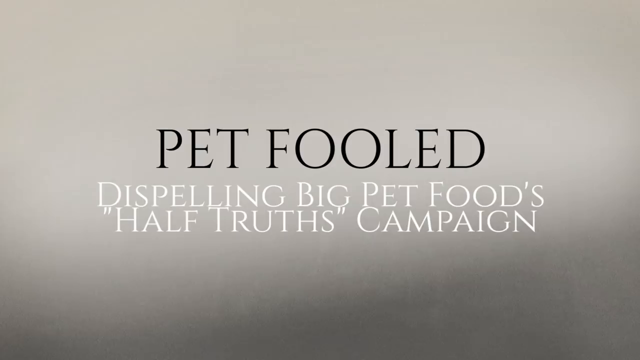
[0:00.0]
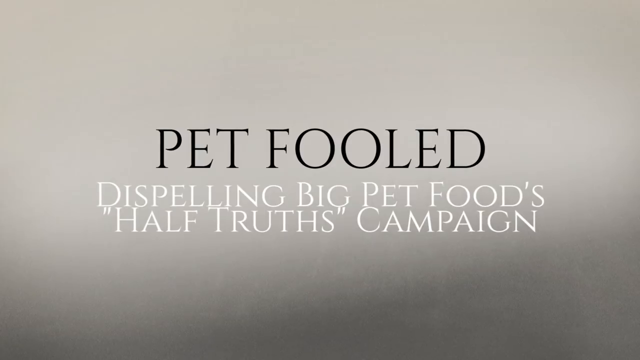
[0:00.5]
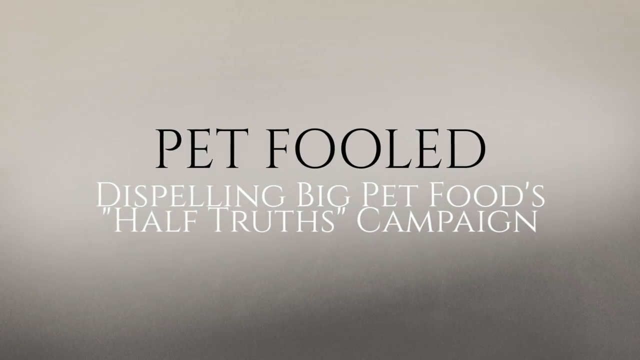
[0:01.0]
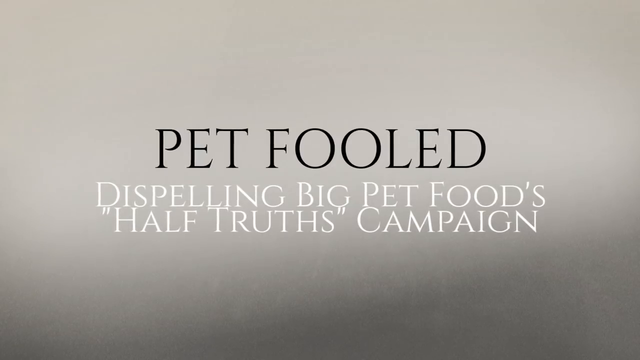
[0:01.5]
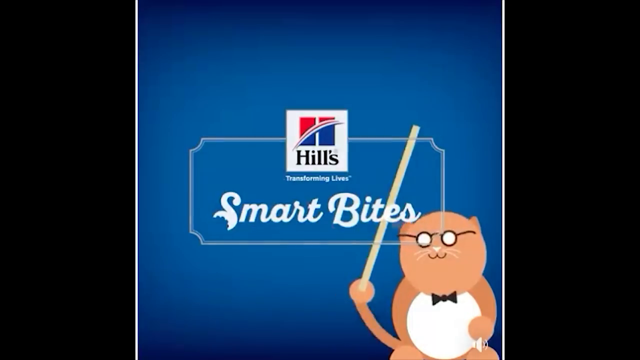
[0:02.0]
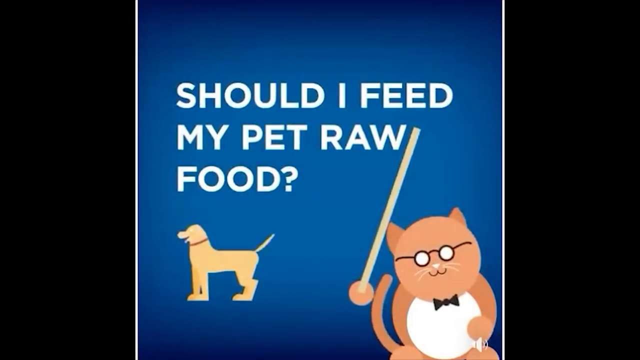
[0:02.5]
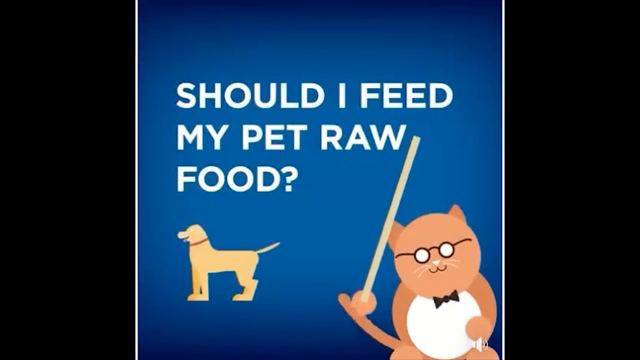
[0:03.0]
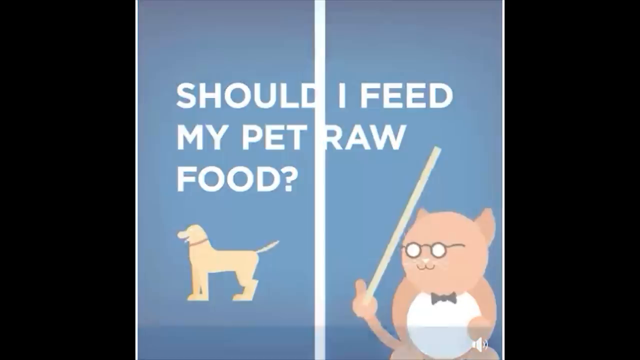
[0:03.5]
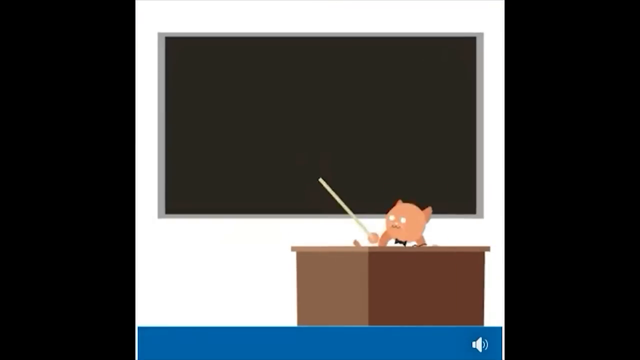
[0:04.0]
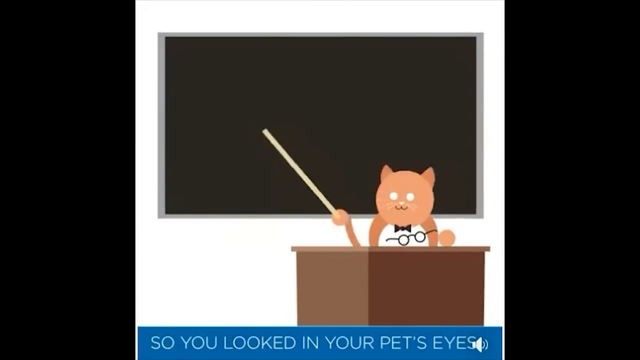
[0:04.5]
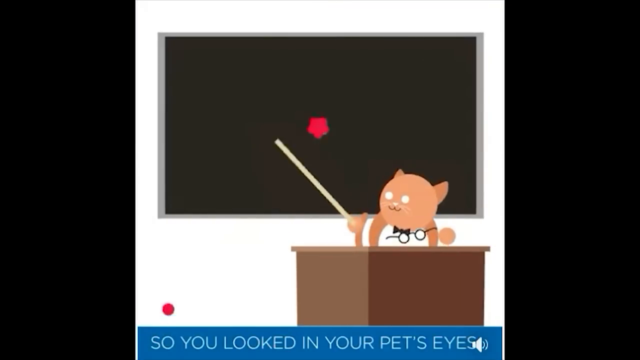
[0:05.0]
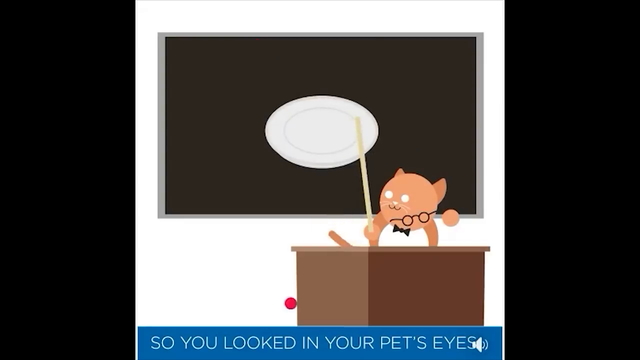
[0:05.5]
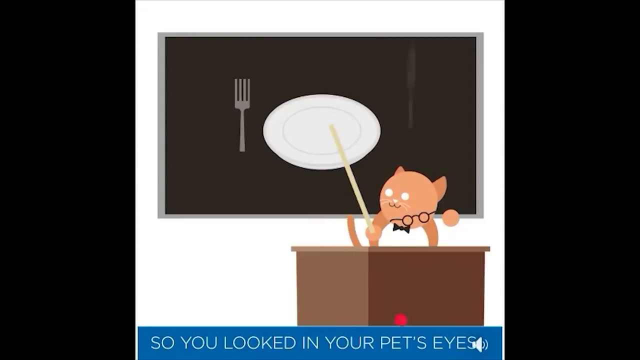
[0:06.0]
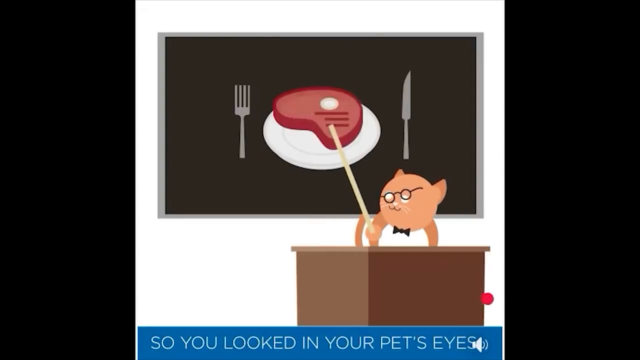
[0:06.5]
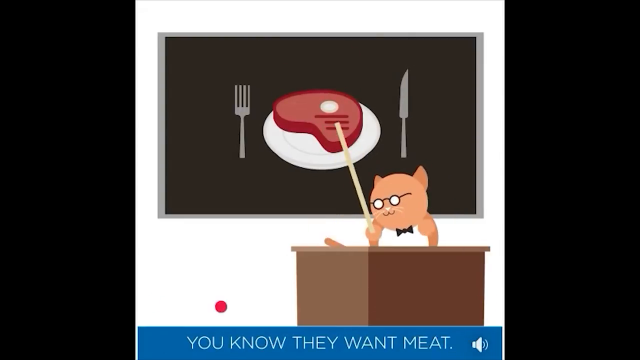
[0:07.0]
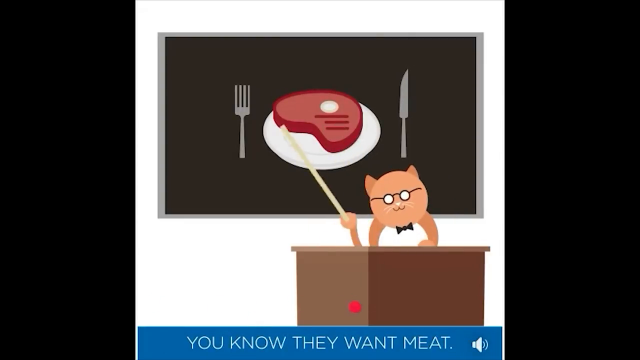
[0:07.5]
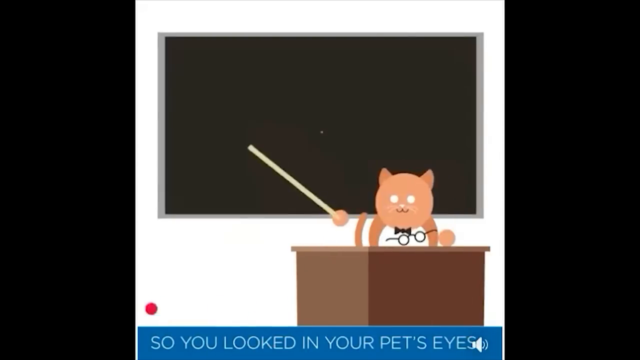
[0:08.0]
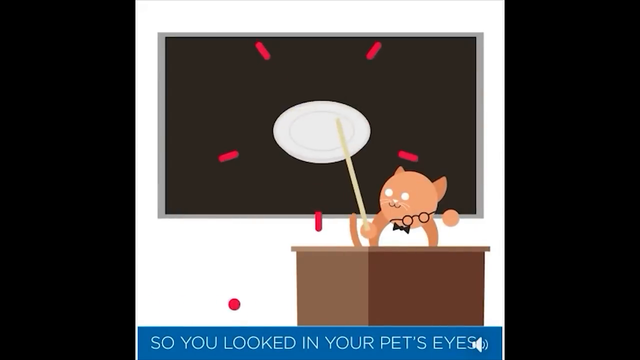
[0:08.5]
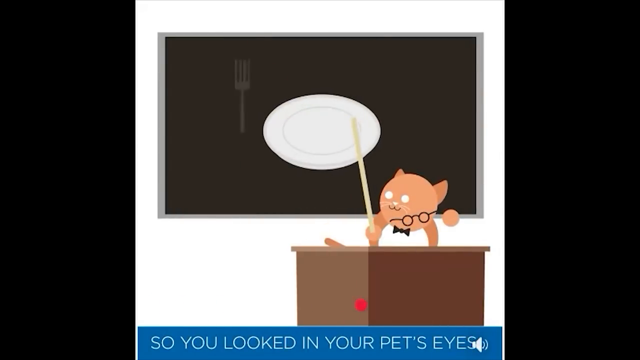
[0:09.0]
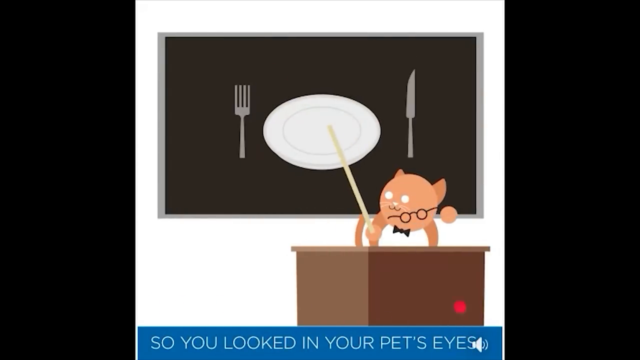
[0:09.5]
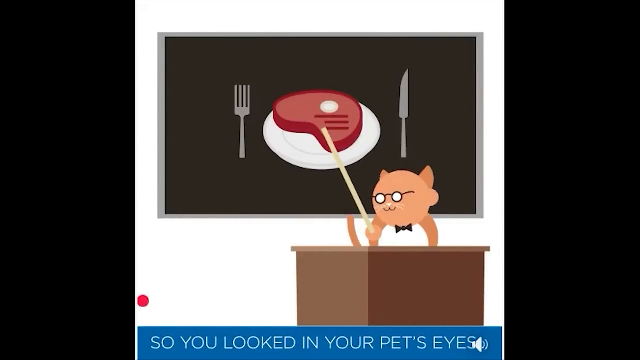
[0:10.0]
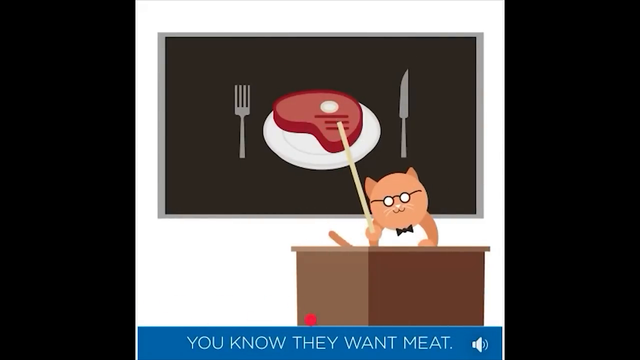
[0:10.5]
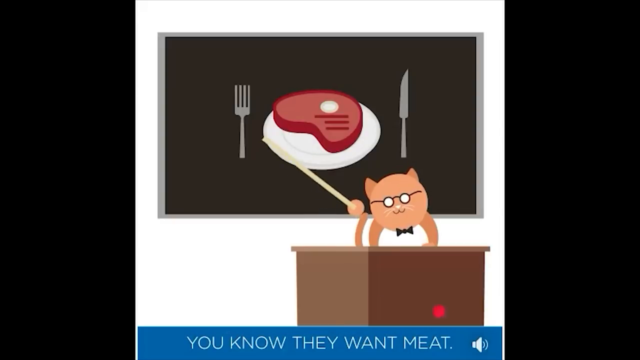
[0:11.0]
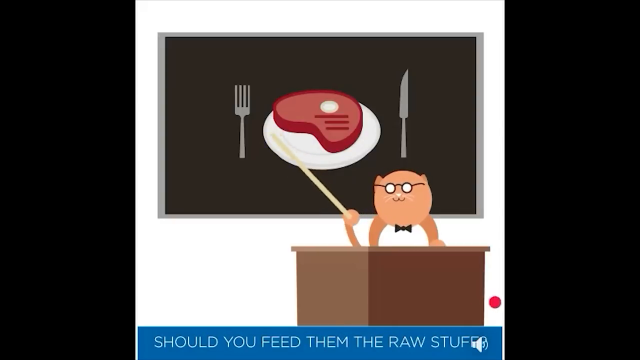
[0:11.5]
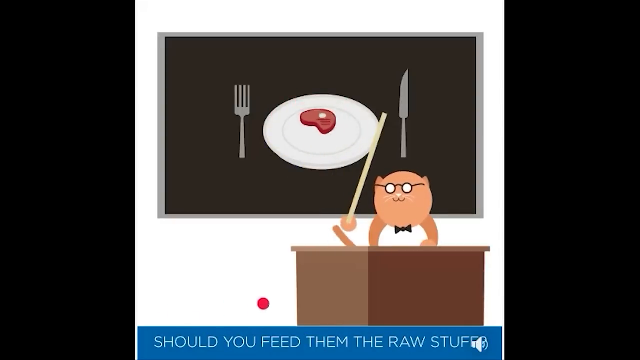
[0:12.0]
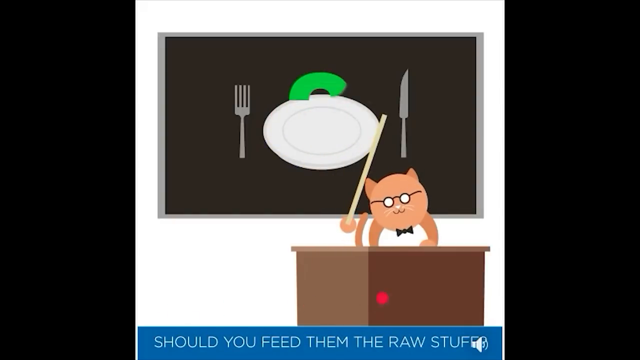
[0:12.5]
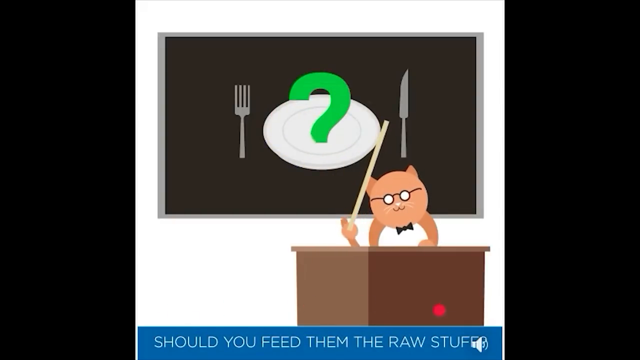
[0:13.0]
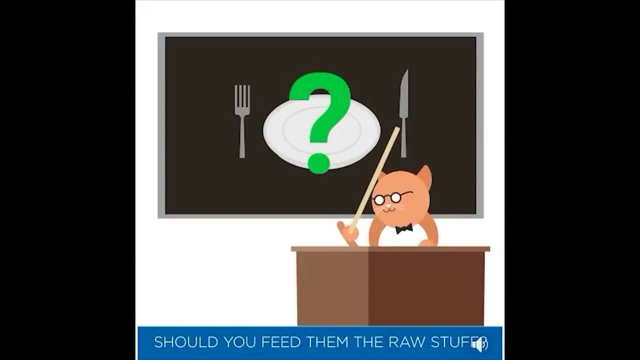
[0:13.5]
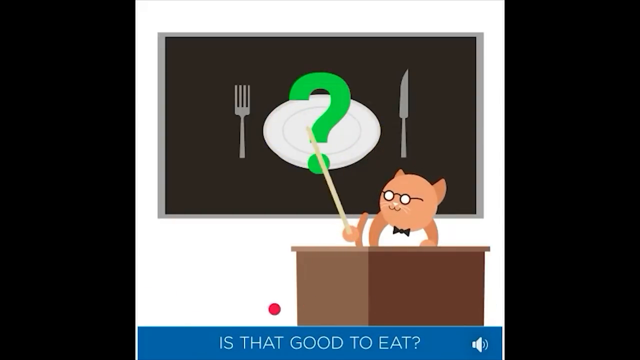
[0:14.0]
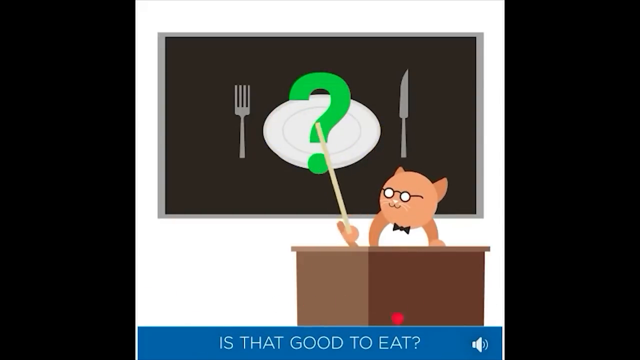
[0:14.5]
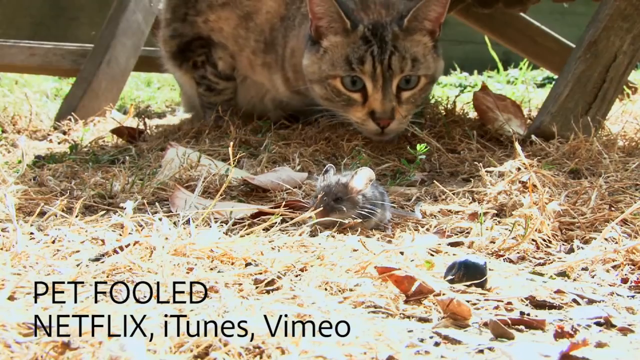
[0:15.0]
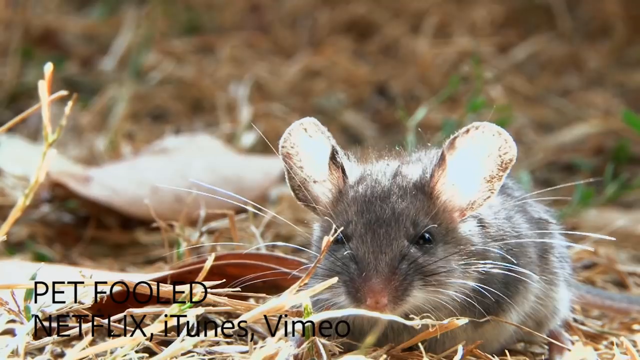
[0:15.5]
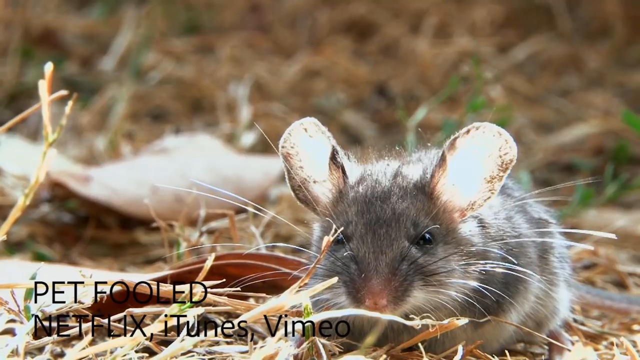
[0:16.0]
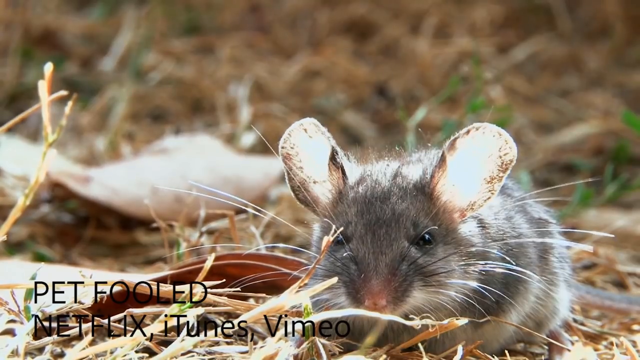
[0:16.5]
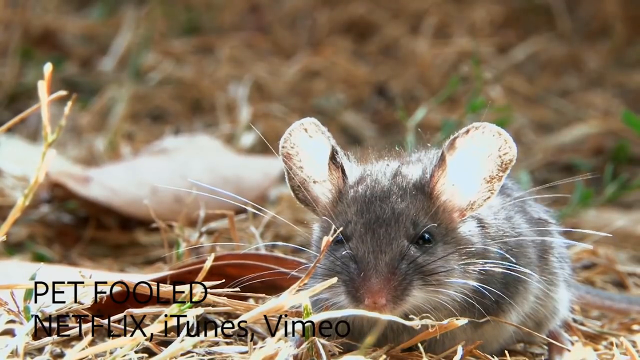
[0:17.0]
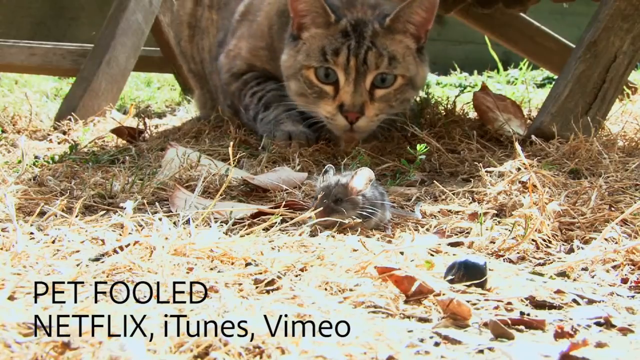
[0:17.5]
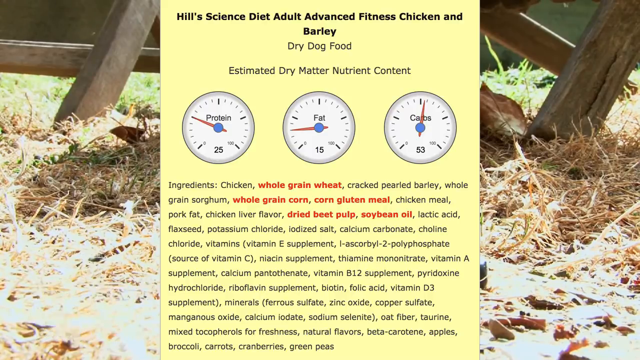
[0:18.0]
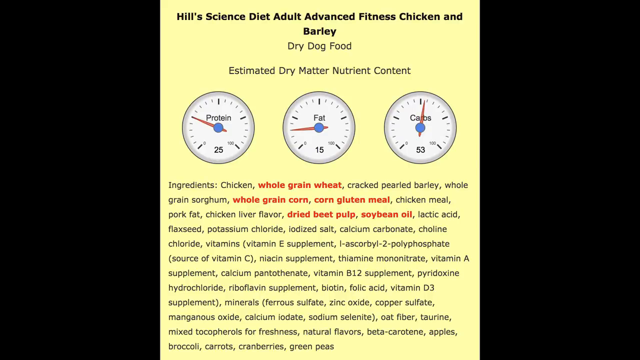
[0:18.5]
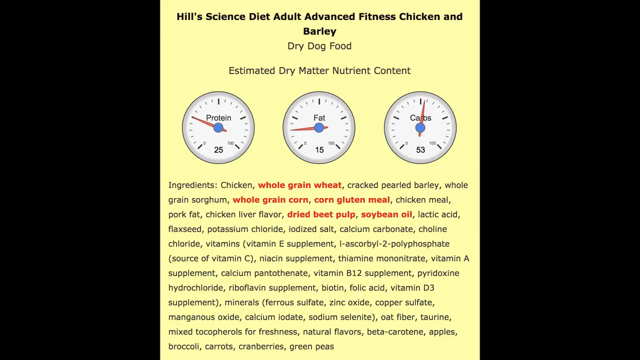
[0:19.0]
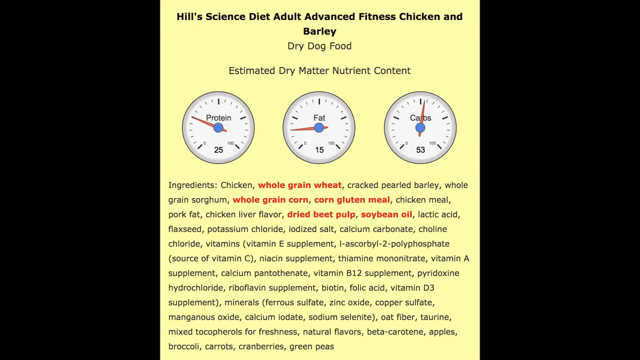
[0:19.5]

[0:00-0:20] This is a video made by Pet Fooled, about the dispelling big pet foods half-truths campaign. The screen turns blue with some clipart-style cartoon images: a dog in the bottom left and another animal in the bottom right holding a large stick in its right hand. The animal wears glasses and a bow tie, and the text reads "should I feed my pets raw food?" The scene changes to a classroom setting with a blackboard, where the creature, apparently a cat, is now behind a desk, still holding the stick in its right paw. On the blackboard, an image of a white plate with a knife, a fork and a piece of meat appears, with the fork on the left and the knife on the right, and a big green question mark goes over the top of the plate. Real footage follows: a tabby cat outside, with a grey mouse, the cat behind the mouse.